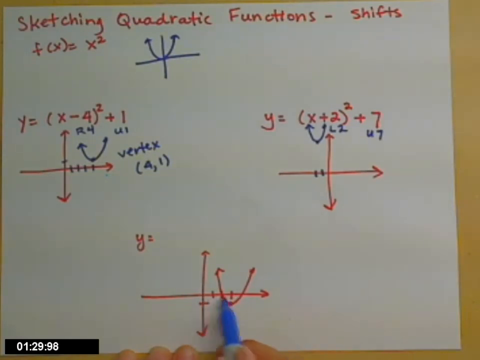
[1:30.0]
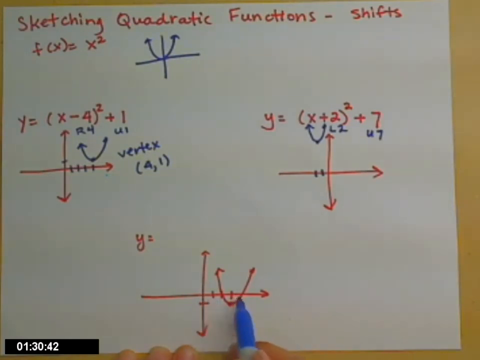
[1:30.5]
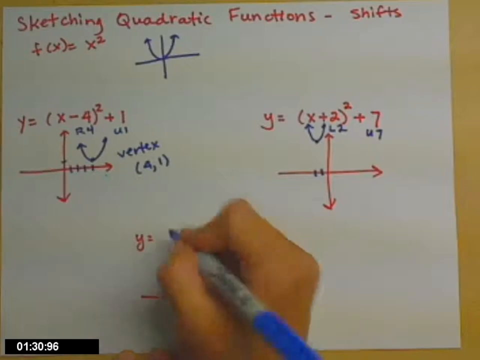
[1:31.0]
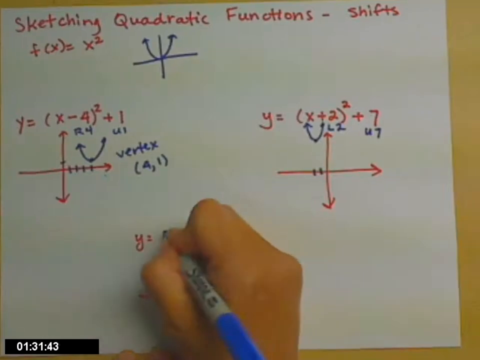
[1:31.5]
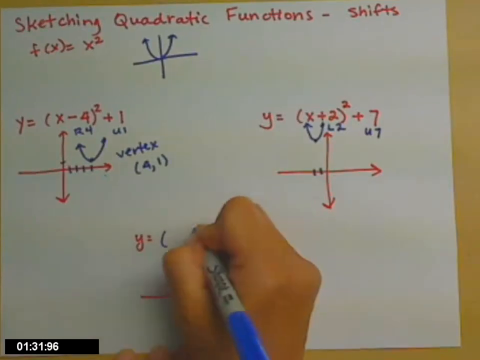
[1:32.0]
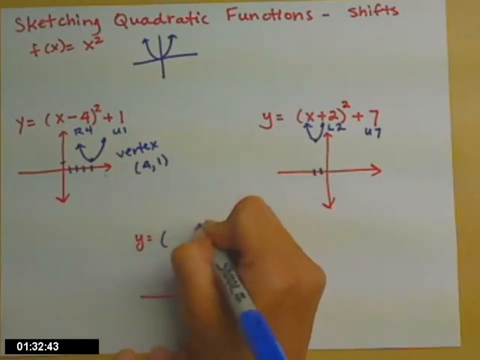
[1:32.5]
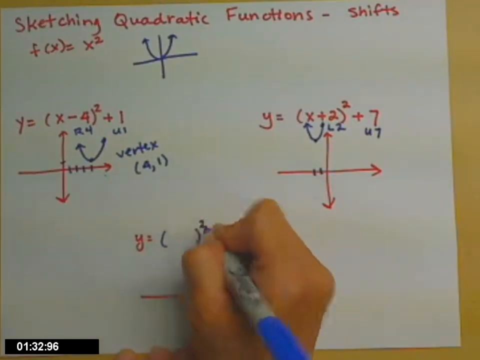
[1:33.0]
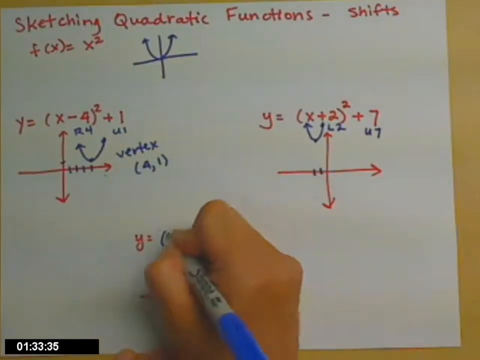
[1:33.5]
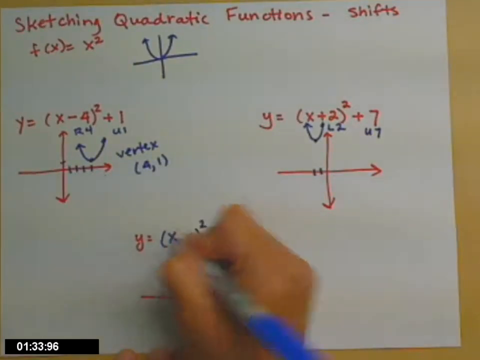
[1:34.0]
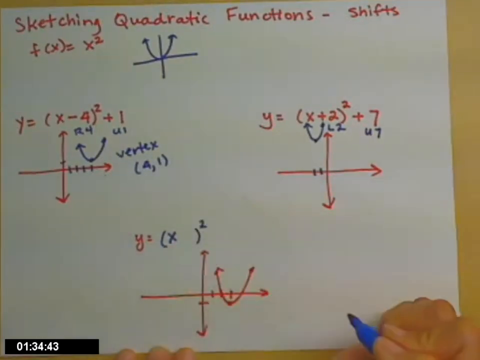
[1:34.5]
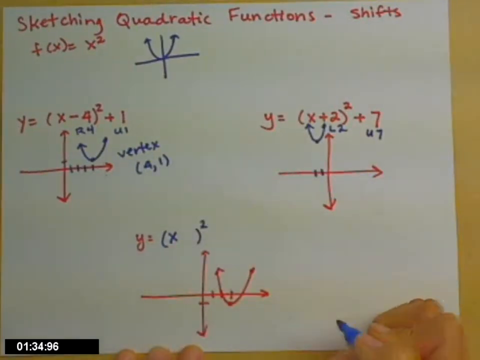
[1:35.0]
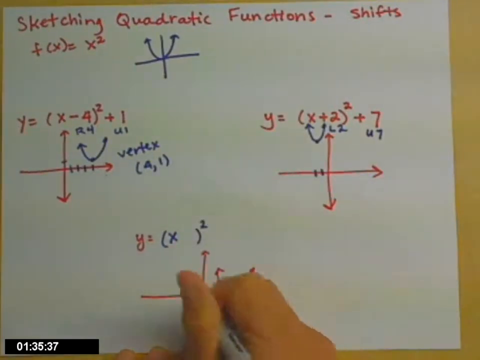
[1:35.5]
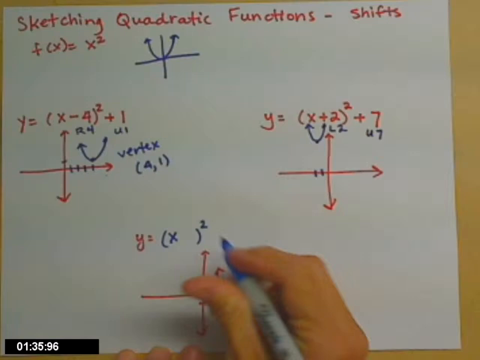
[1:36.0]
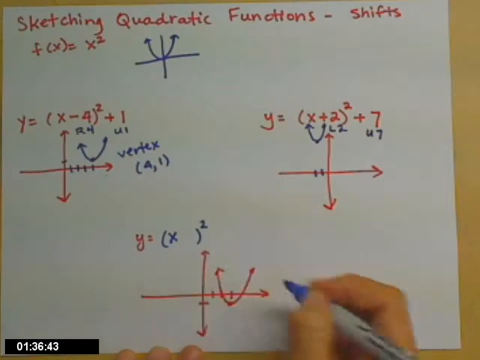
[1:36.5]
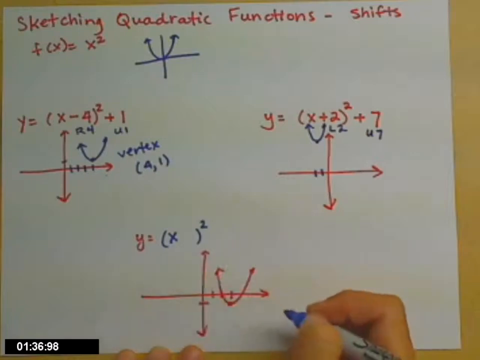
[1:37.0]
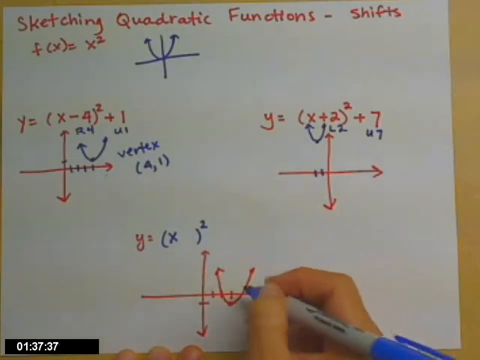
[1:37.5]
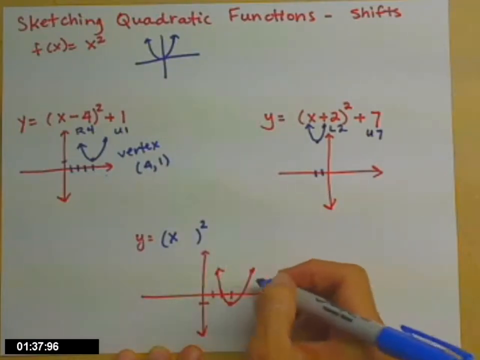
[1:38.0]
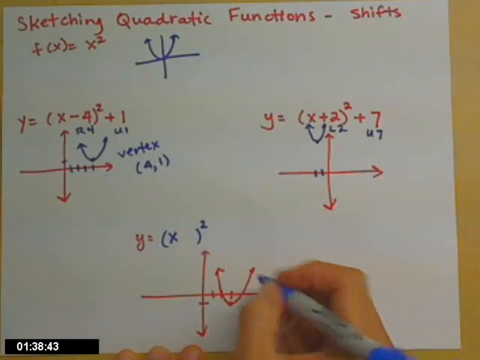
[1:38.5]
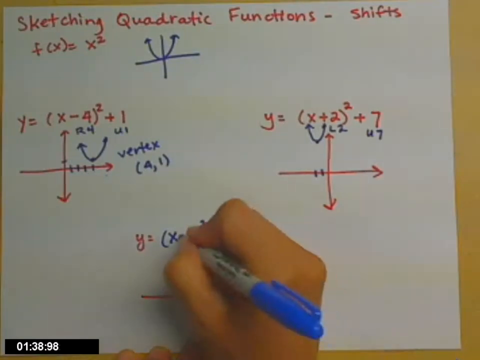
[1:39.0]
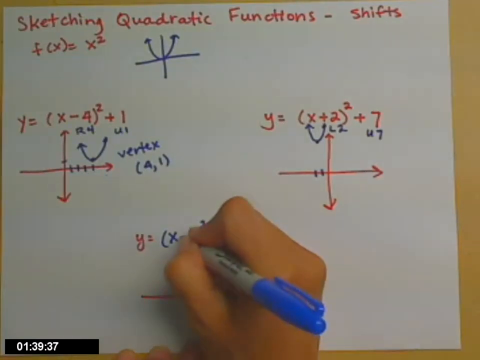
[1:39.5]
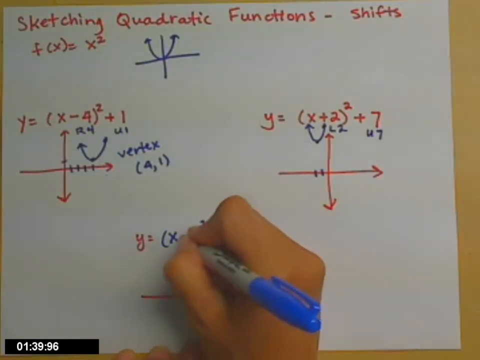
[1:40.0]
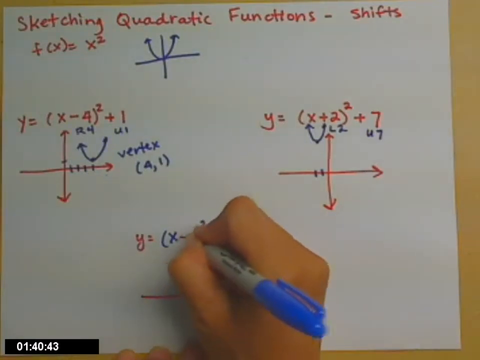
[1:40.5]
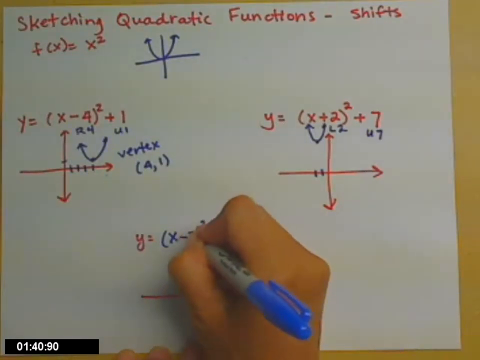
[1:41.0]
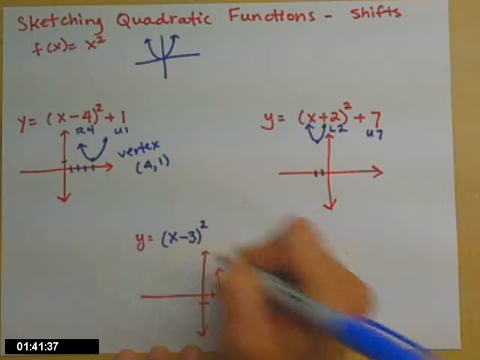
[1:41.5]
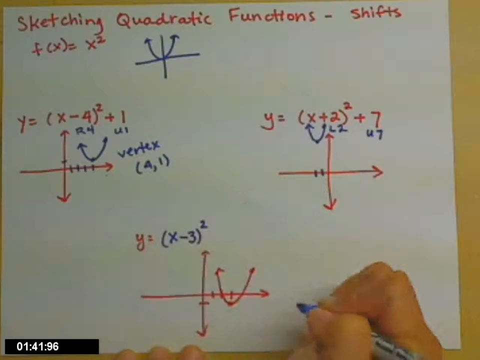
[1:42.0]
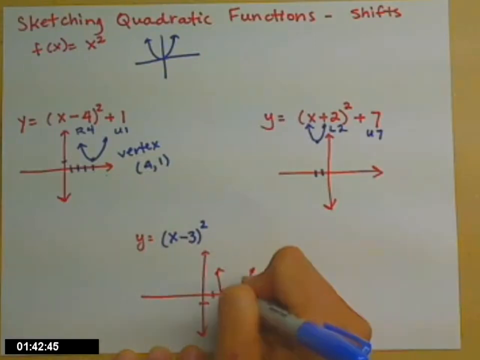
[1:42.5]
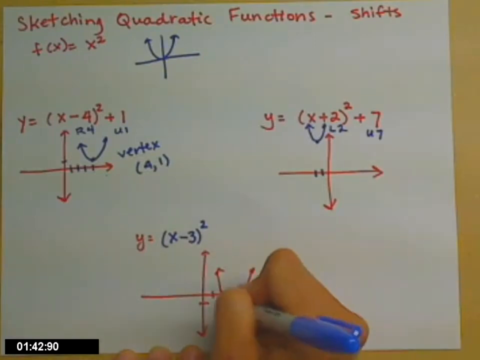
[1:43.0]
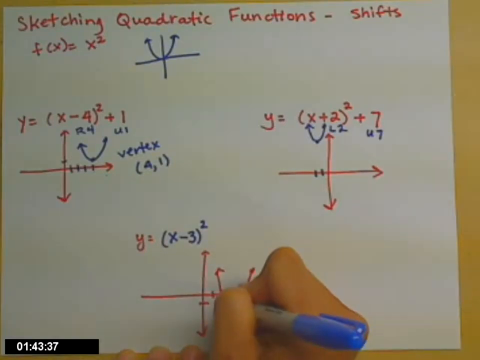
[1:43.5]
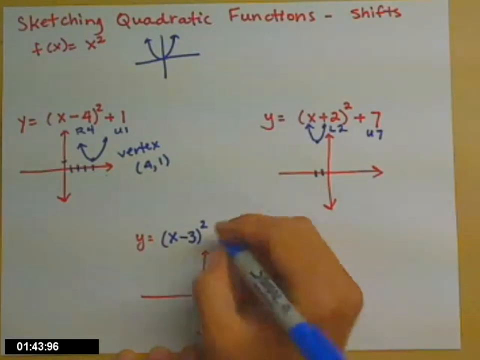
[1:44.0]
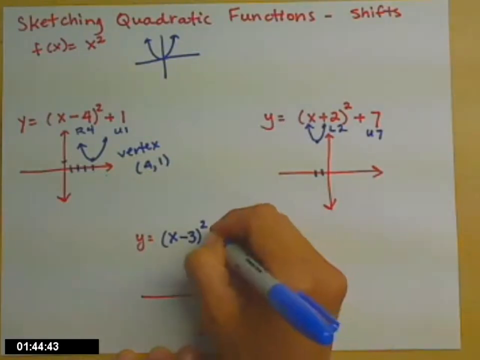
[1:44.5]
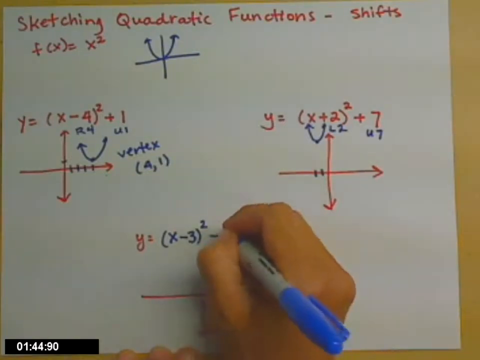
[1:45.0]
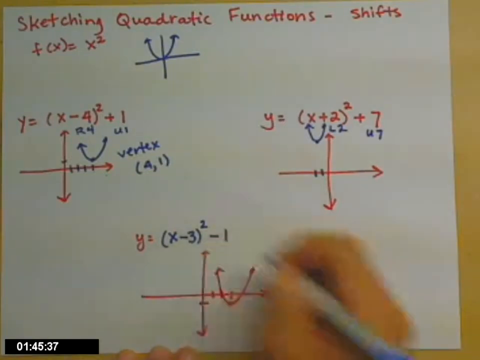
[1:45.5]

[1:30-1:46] The pen tip points at the vertical lines where three vertical lines were drawn going down. They hover the pen over the third sum, which disappears as the fist goes over the top. Where "Y =" was written in red, they write "(x = 3) 2 = 1". The hand comes down from the bottom middle section to the bottom right-hand corner of the screen and disappears, with the tip of the blue pen just about visible in the bottom right-hand corner. The three sums are left on the page, clearly finished. In the very background of the paper is a desk with a brown shade, on which they are writing.